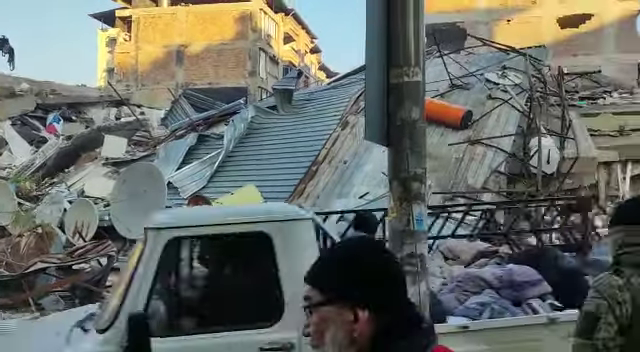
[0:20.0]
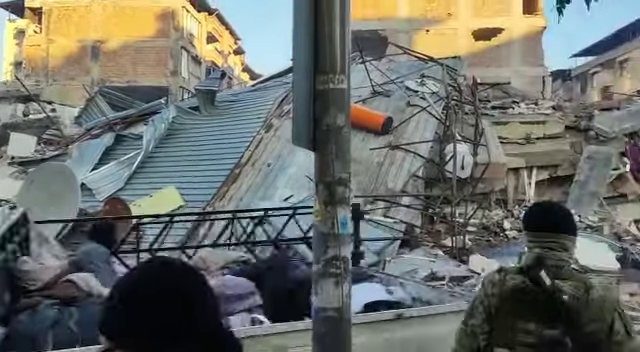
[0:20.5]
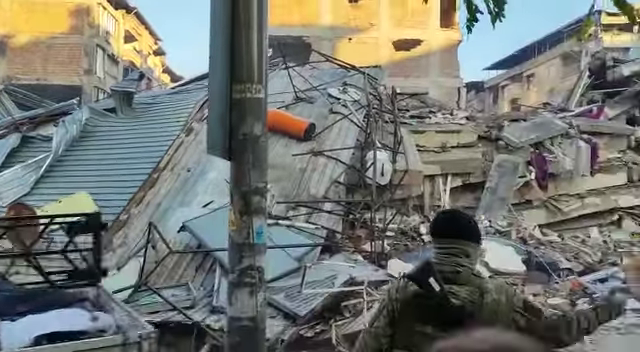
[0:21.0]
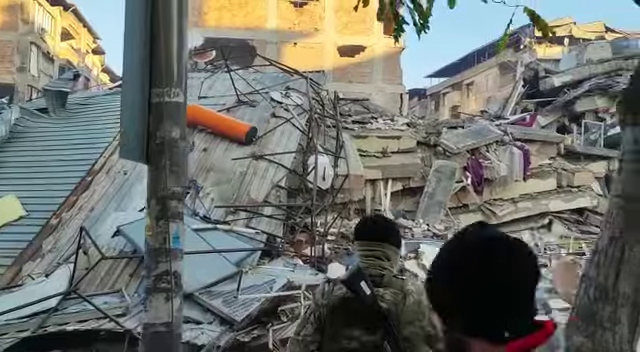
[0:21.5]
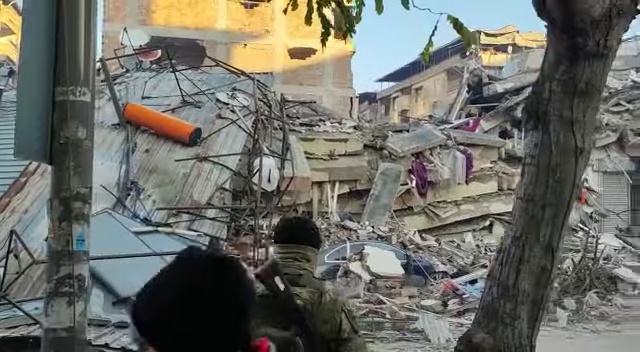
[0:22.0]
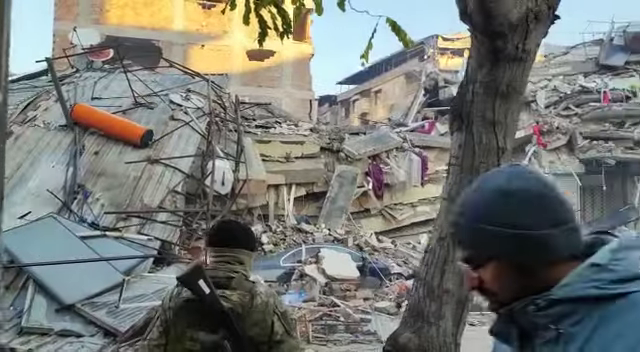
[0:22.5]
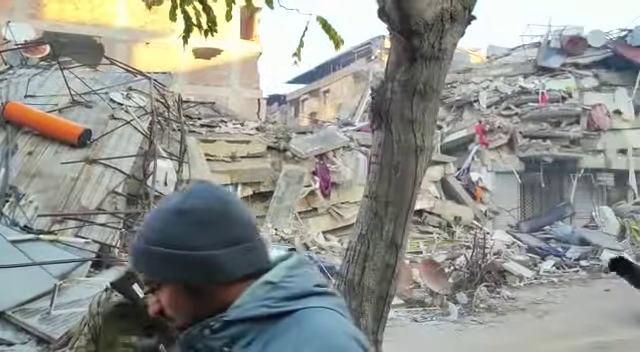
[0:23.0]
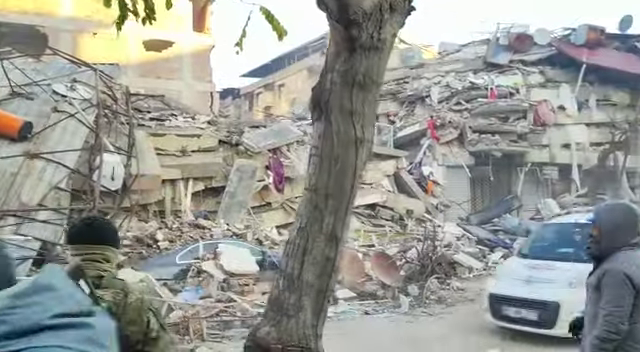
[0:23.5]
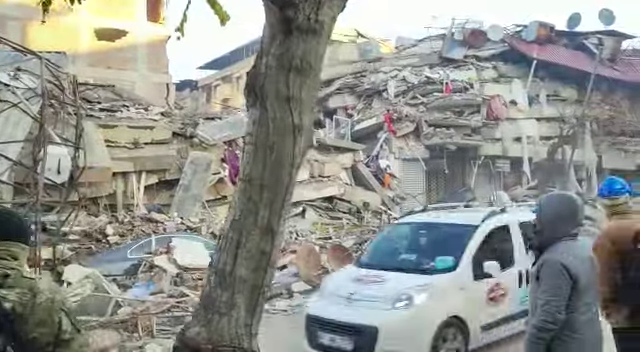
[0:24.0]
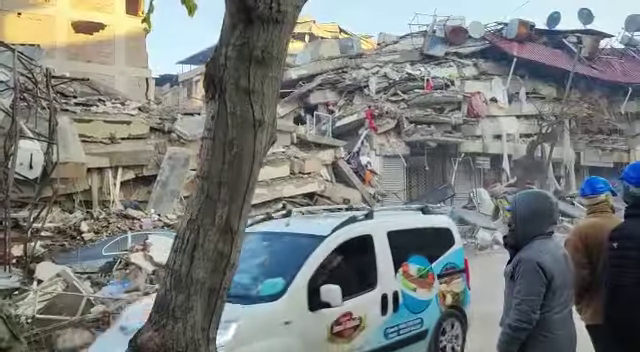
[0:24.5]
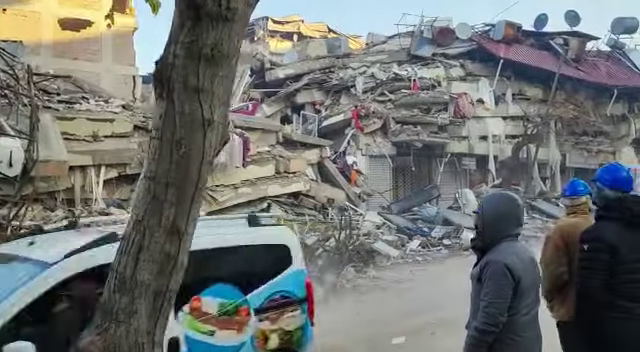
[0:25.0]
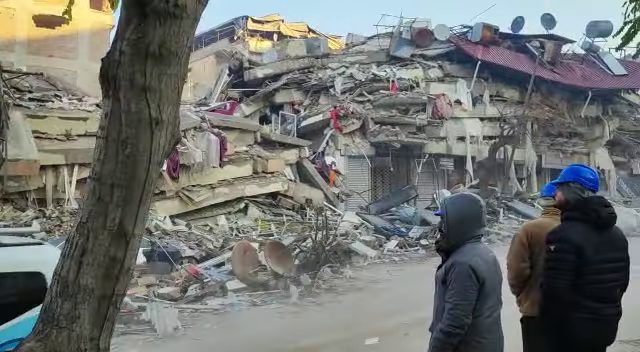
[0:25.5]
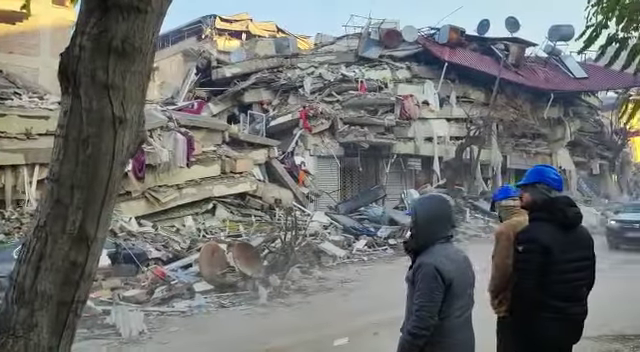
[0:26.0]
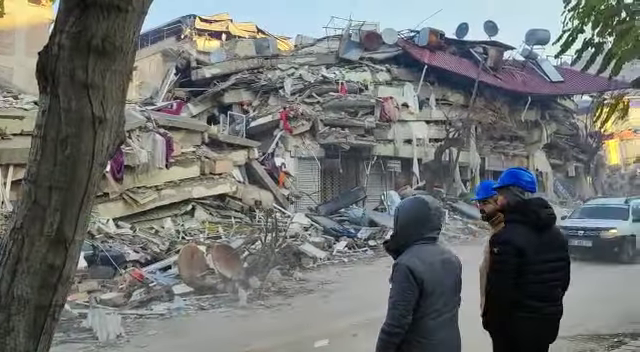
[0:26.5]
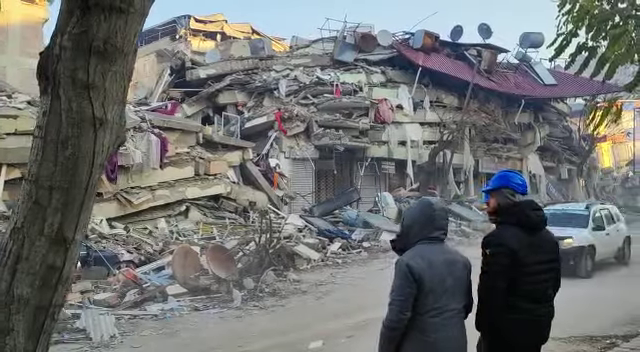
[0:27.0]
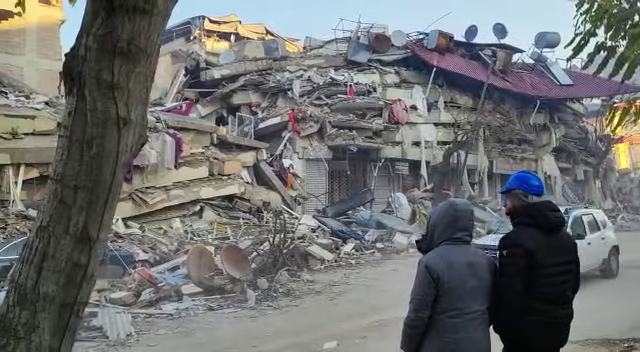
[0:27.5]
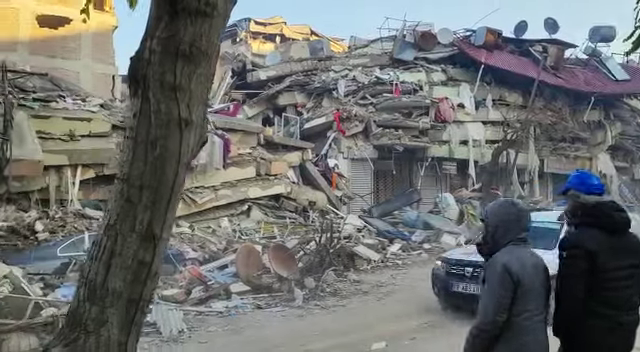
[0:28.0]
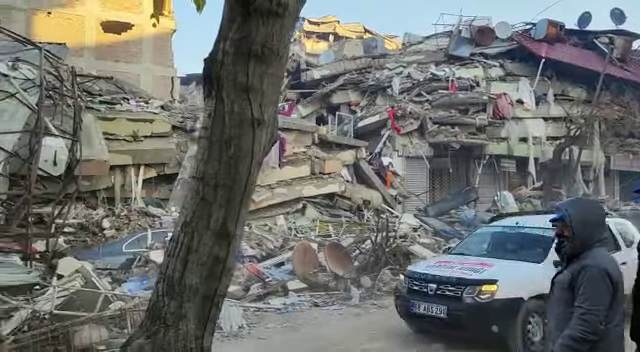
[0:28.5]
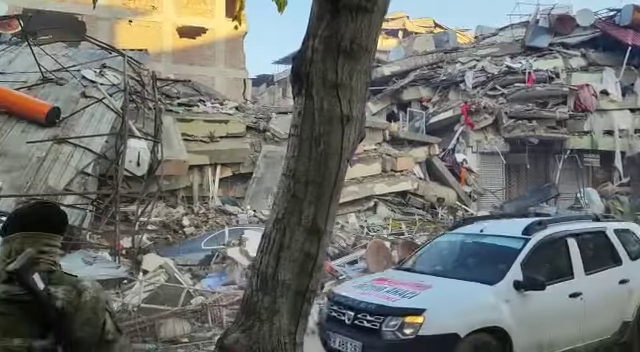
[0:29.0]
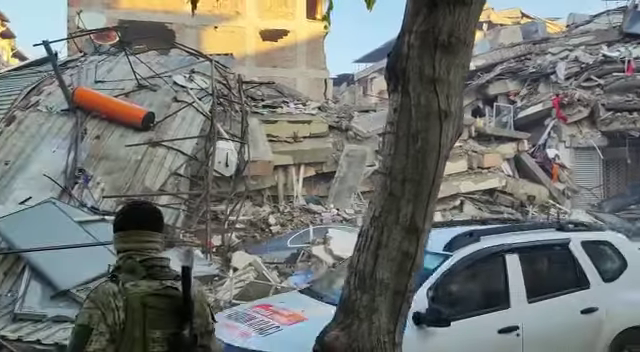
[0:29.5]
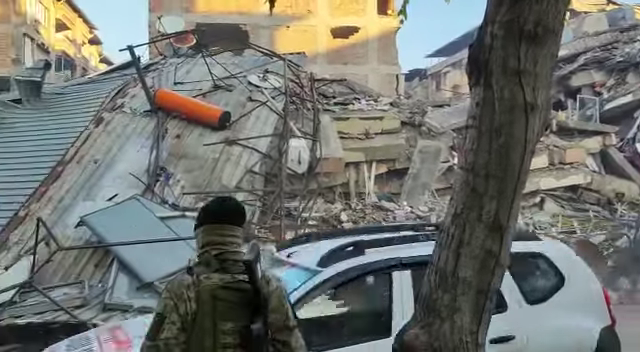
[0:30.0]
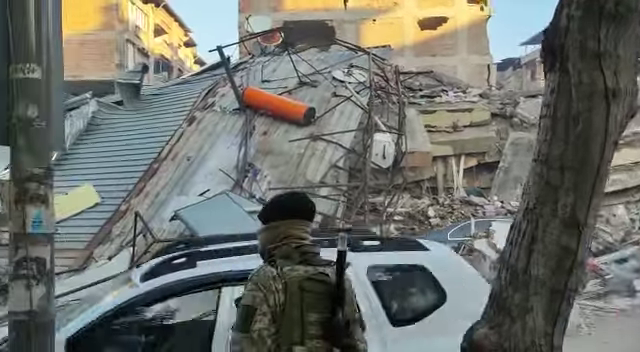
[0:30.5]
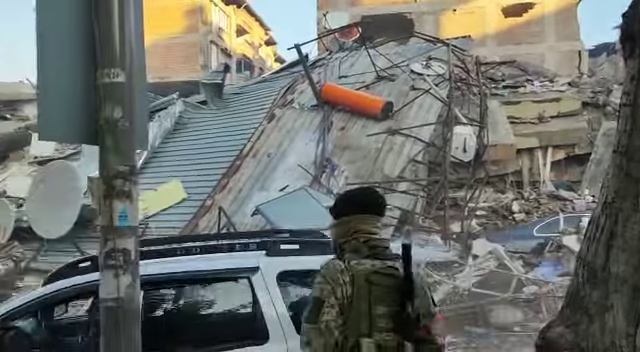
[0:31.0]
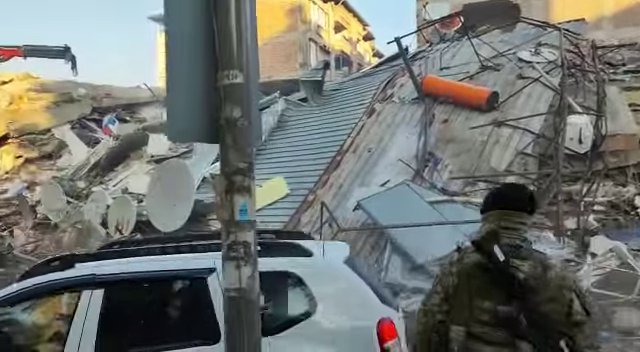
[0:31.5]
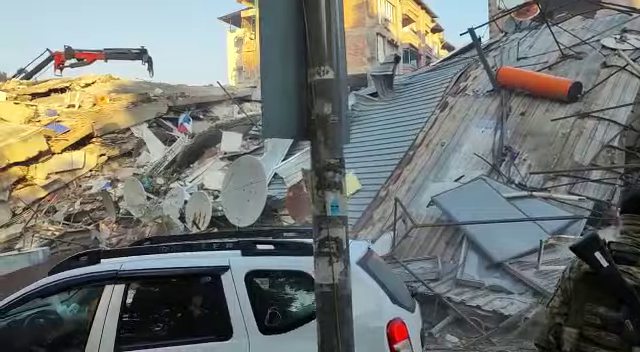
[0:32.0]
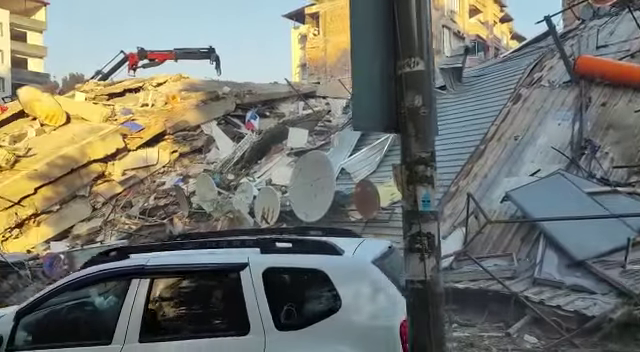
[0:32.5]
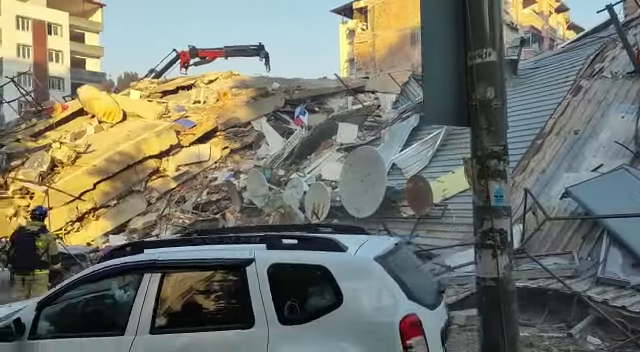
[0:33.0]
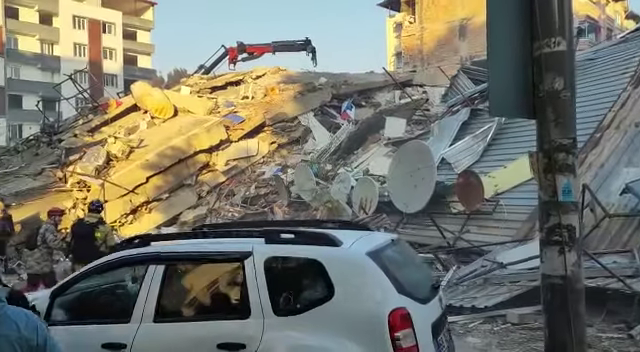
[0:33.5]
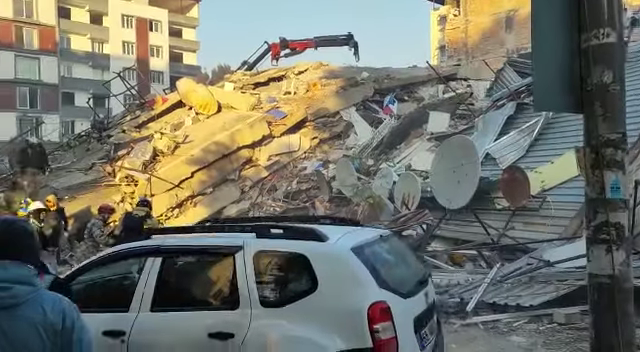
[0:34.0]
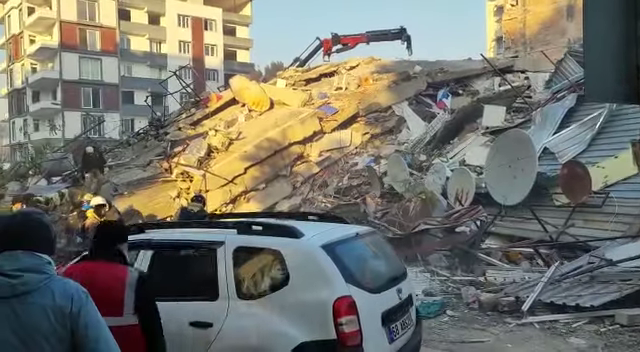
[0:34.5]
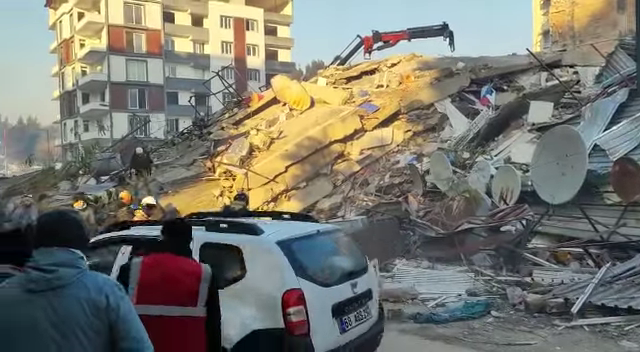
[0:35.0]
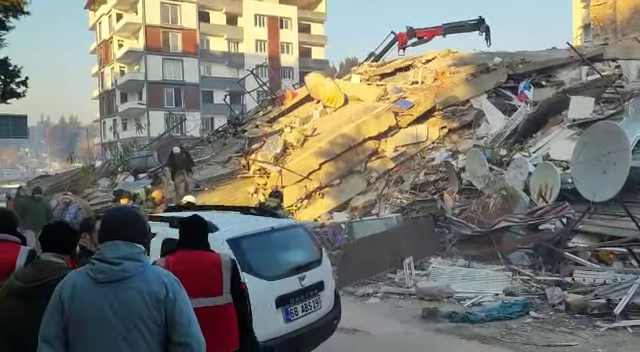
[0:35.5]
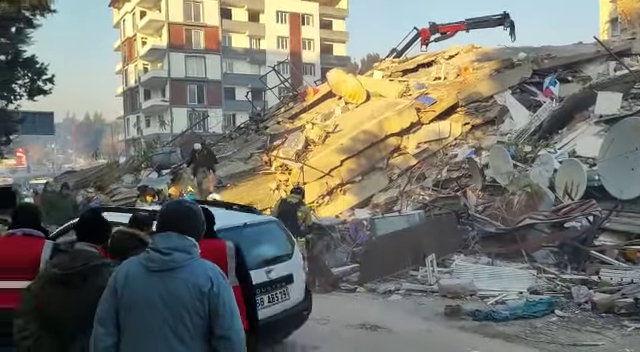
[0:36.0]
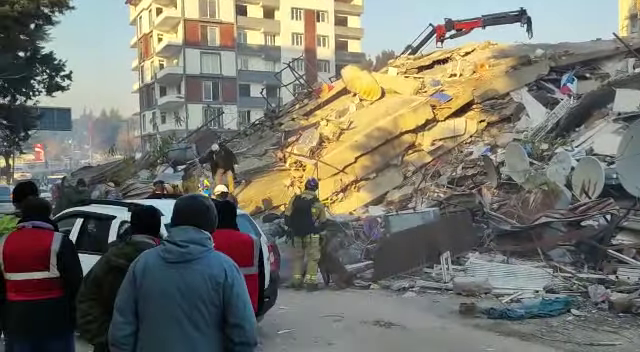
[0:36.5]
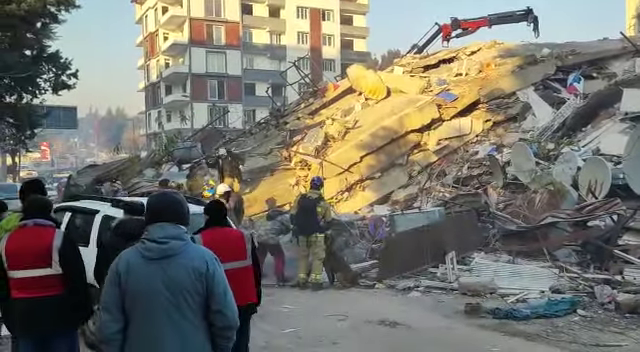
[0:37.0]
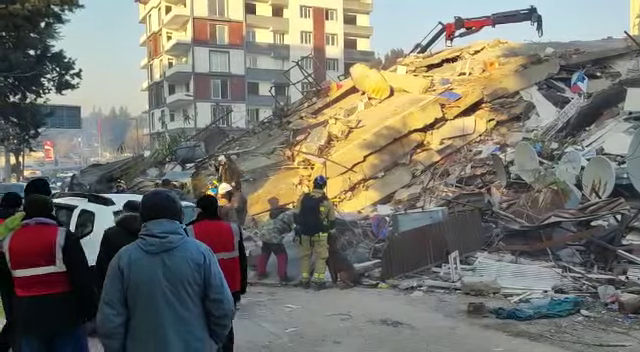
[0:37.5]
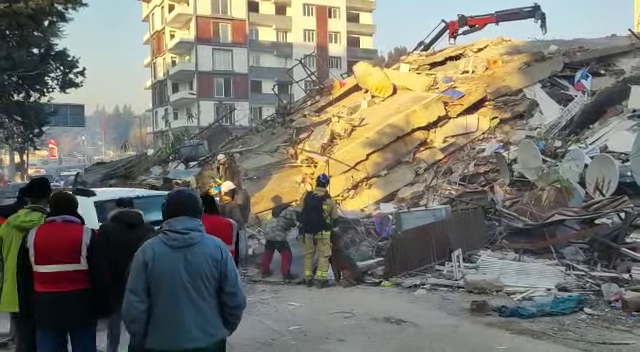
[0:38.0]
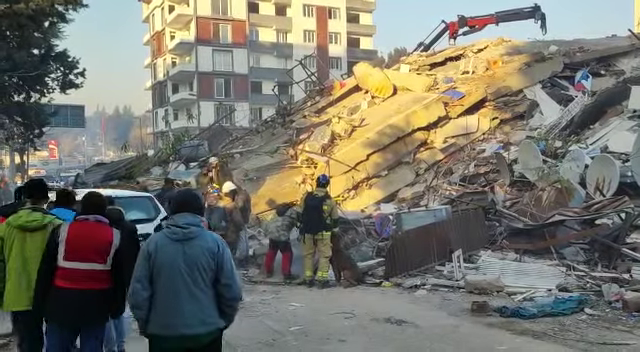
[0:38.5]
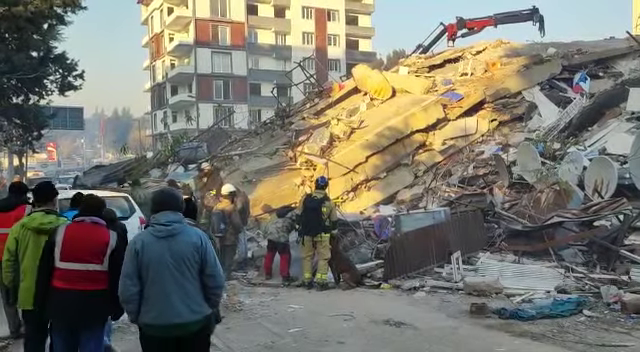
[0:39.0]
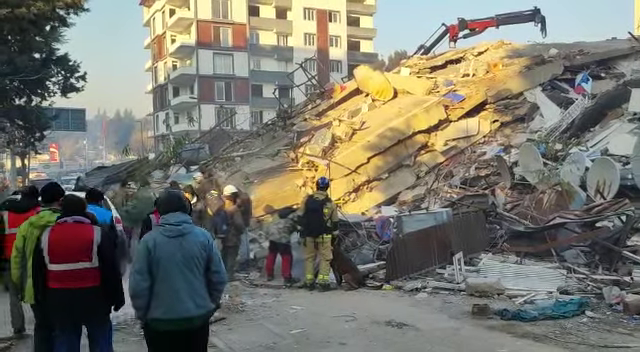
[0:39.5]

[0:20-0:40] Several iron structures, such as poles, appear to be bent. Other large buildings stand tall behind what appears to be the collapsed building. As the camera pans right, more of the glass building, which is all mashed together, comes into view. There is clothing along with debris from the building, with either ash or smoke and dust, apparently from the rock grinding together. More individuals who have blue top hats gaze toward the building. Cars continue to pass through the small lane, intersecting with one another. More civilians pass through in shock and appear curious as they stare at the large pile of the building that has collapsed on itself.